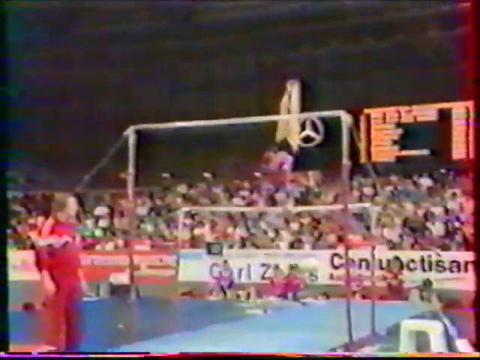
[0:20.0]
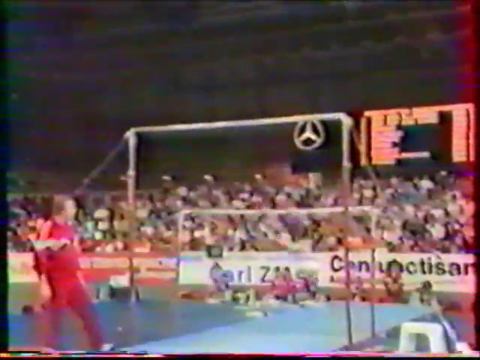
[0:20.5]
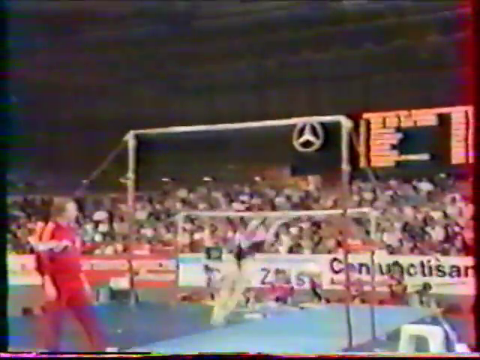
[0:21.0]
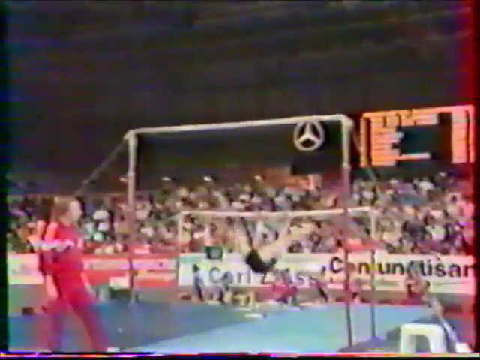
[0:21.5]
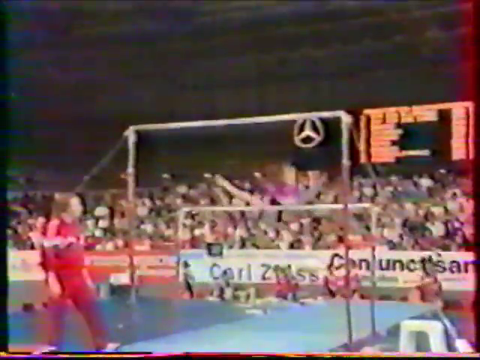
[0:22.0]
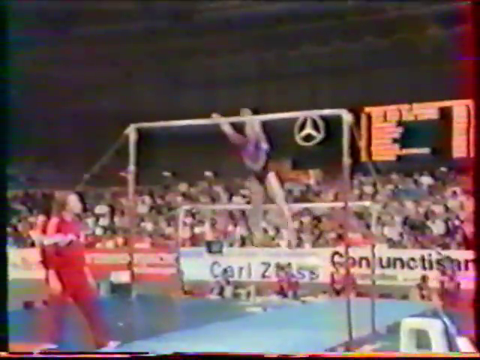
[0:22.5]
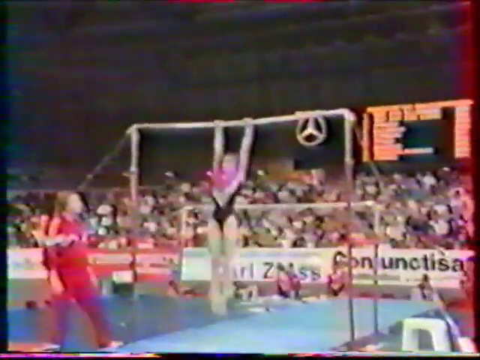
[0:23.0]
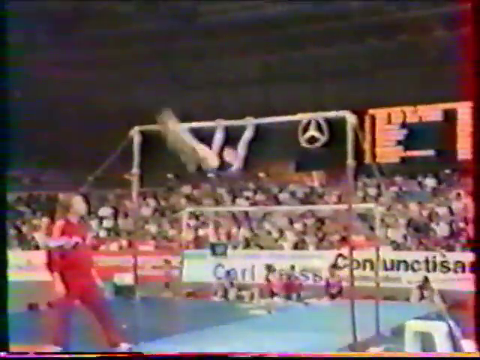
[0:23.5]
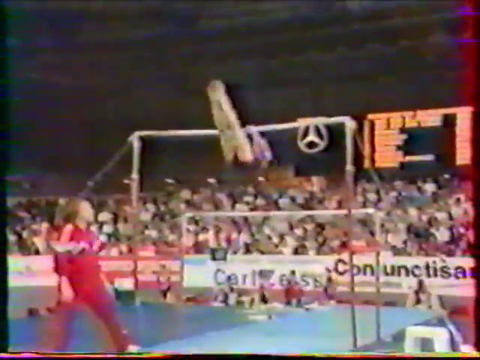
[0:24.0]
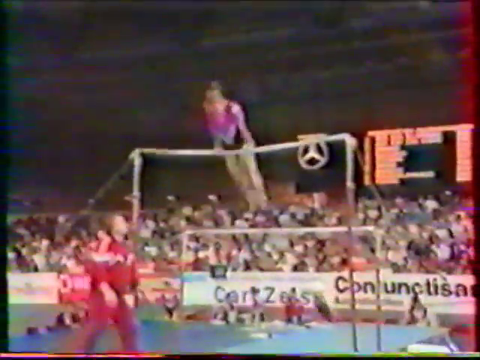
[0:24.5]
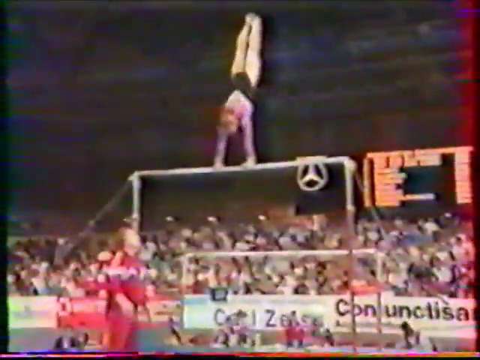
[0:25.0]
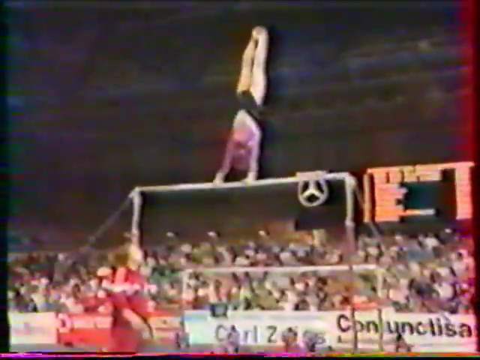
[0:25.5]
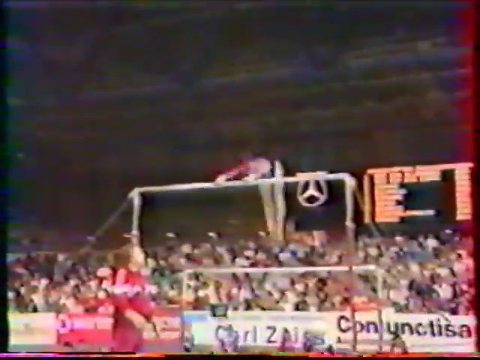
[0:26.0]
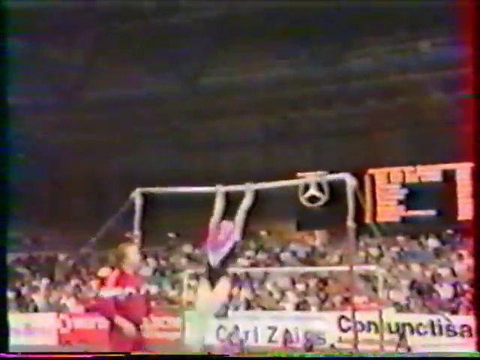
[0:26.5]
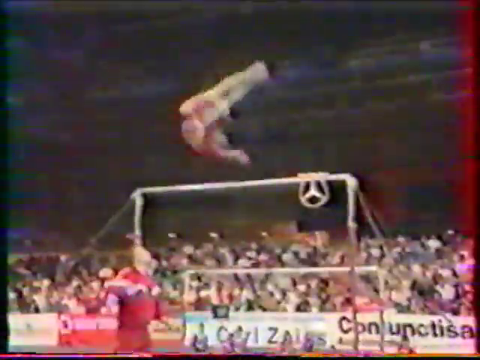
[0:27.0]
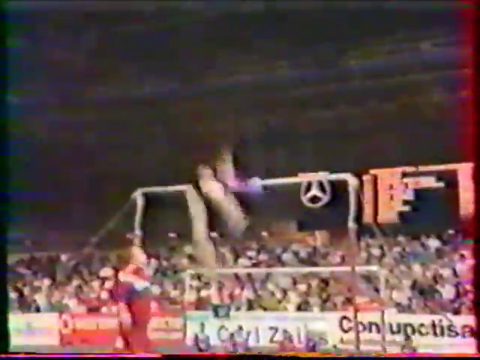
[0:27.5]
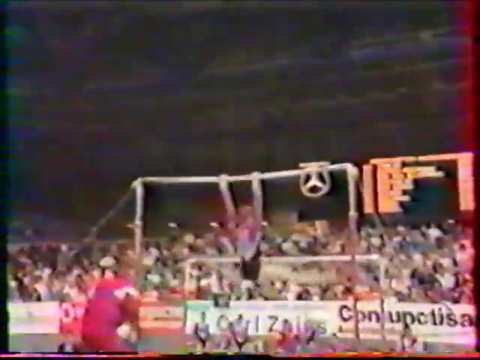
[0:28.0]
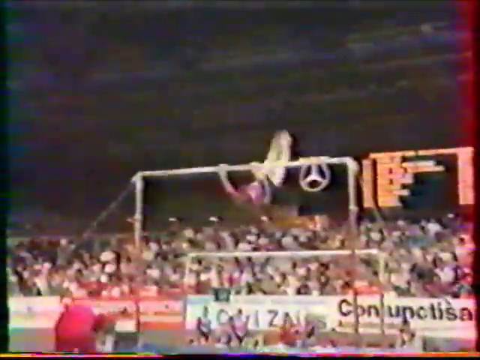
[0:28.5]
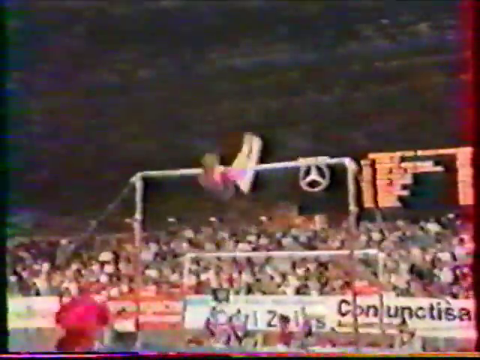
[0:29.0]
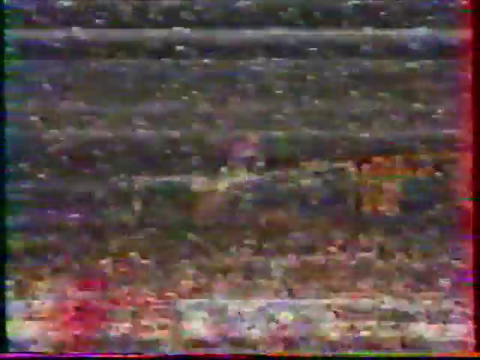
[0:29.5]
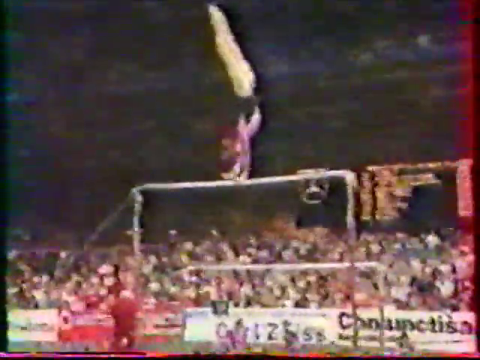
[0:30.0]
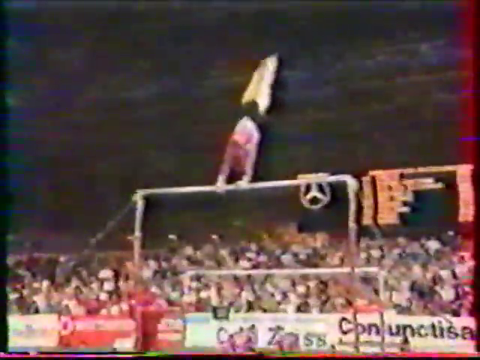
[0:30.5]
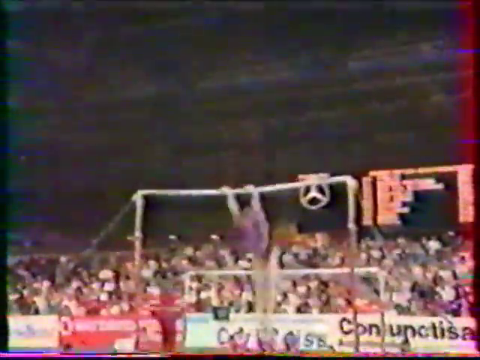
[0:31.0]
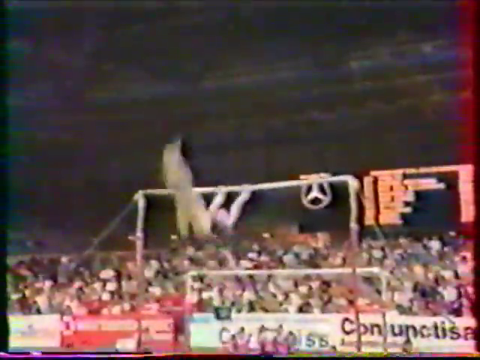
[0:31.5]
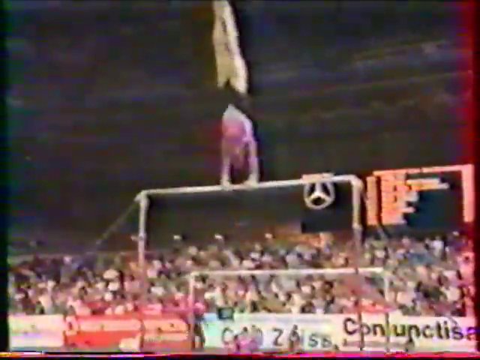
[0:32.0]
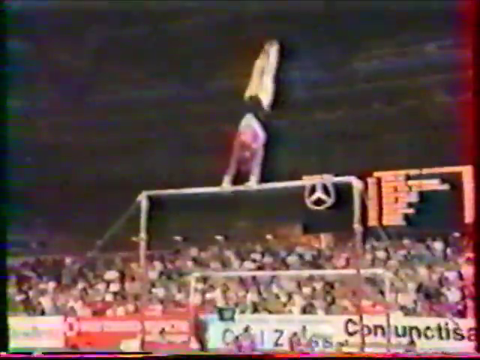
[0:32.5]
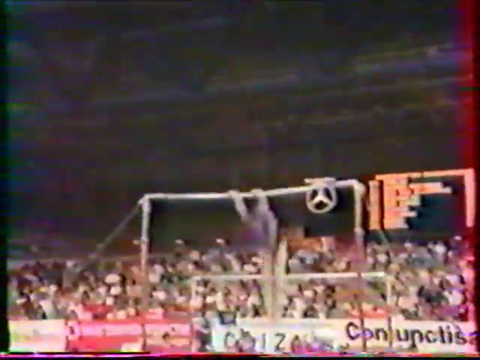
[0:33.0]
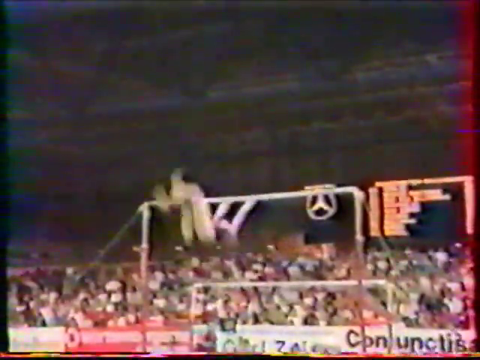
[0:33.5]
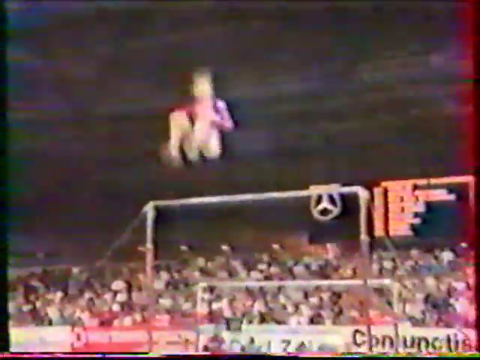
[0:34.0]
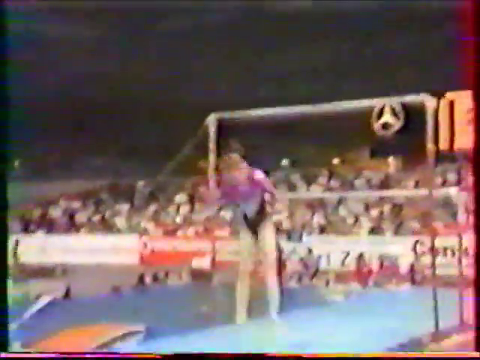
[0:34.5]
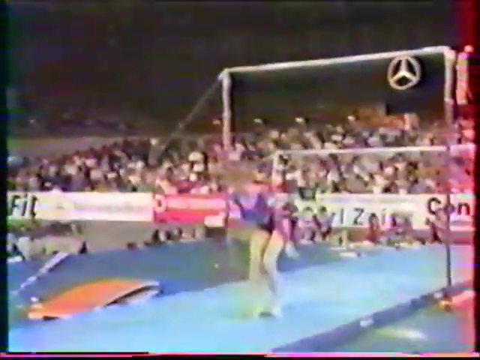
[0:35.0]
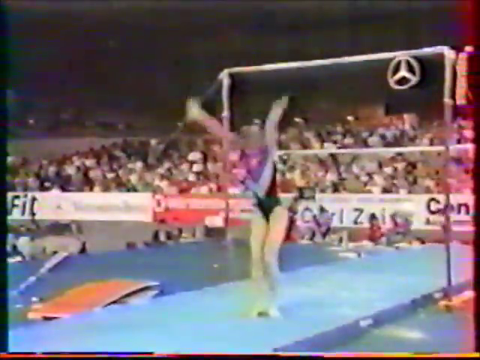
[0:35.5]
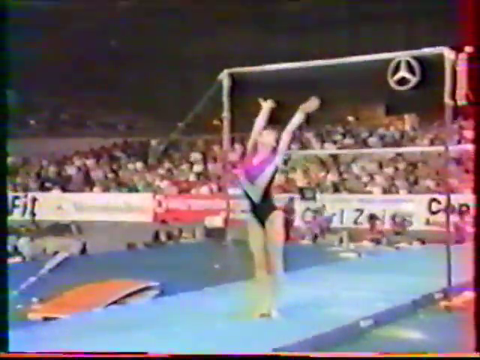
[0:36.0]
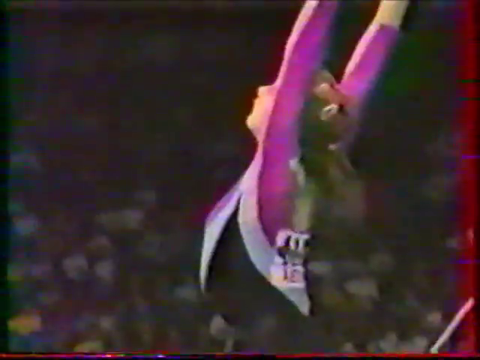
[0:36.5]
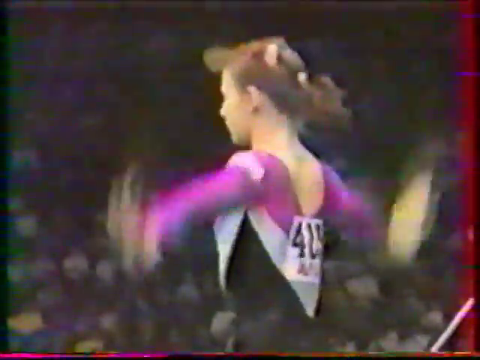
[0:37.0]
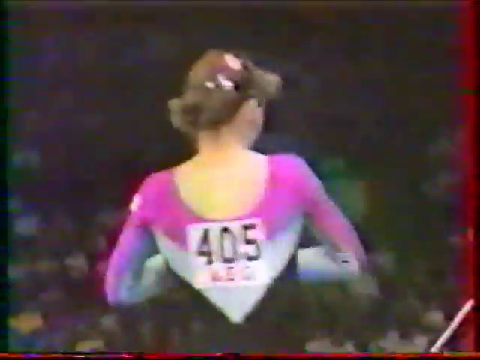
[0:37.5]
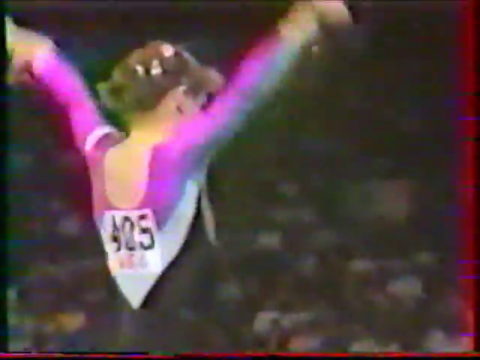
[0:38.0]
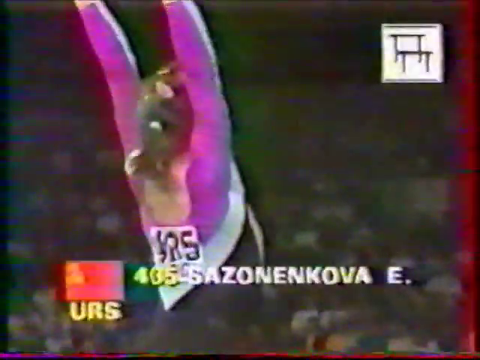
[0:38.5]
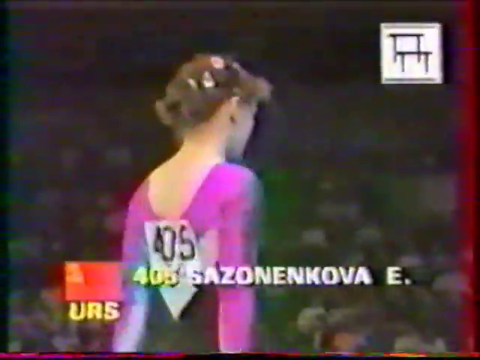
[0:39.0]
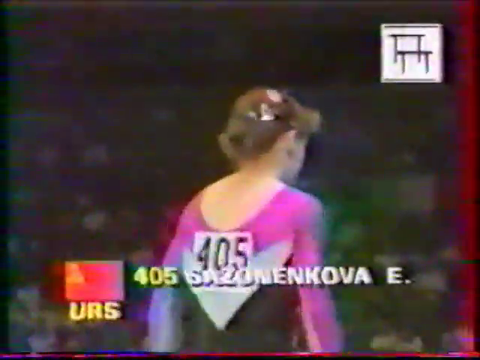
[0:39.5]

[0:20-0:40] Having moved to the lower of the two parallel bars, the gymnast continues to perform manoeuvres, which end with her in a kind of seated position on the bar. From there she propels herself toward the higher bar and grips it with both hands. She swings forward, bringing both legs up into a vertical position, then swings her upper body up on the far side of the bars as she straightens her legs to point down. Her legs are then drawn above her so that her arms are straight, her head slightly forward, and her back straightening as she brings her legs up to vertical and tucks her head in. From that position she drops into a swinging motion, ending up vertical below the bar, then comes back up, lets go of the bar, performs a turn in the air and catches the bar with both hands, facing the opposite direction.